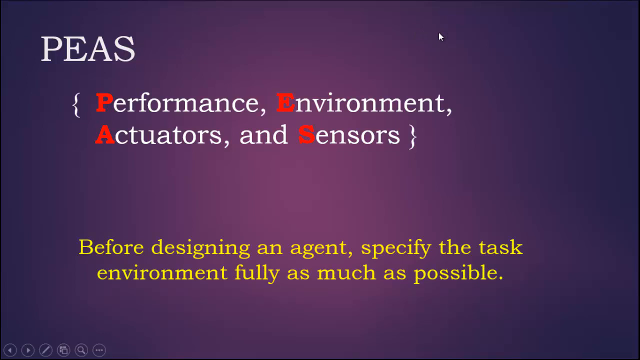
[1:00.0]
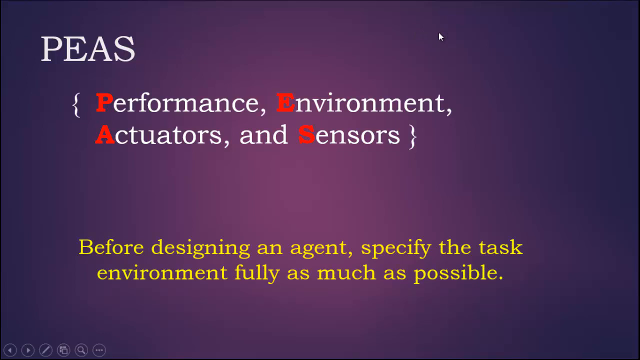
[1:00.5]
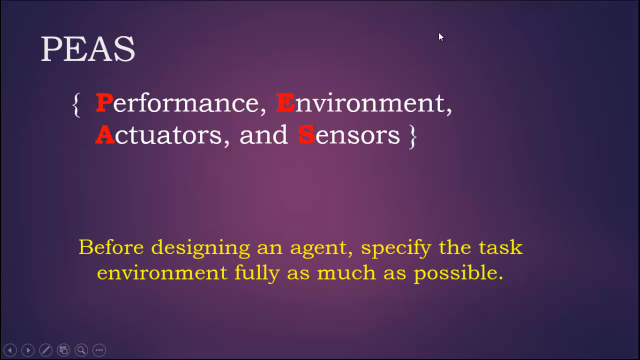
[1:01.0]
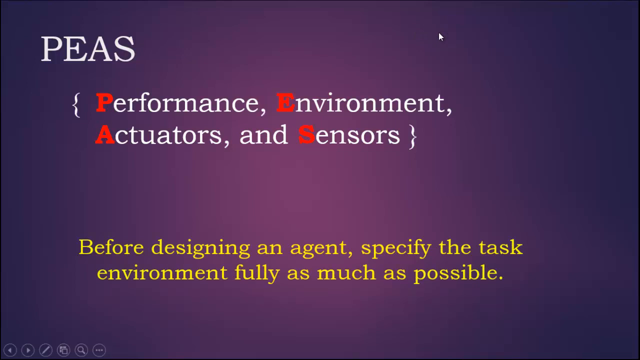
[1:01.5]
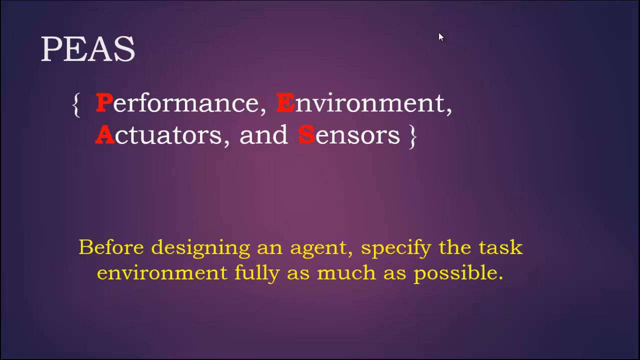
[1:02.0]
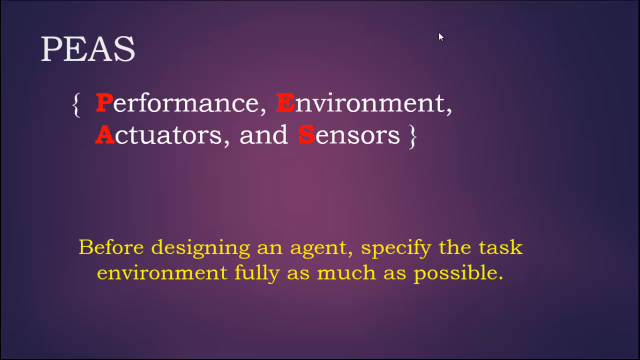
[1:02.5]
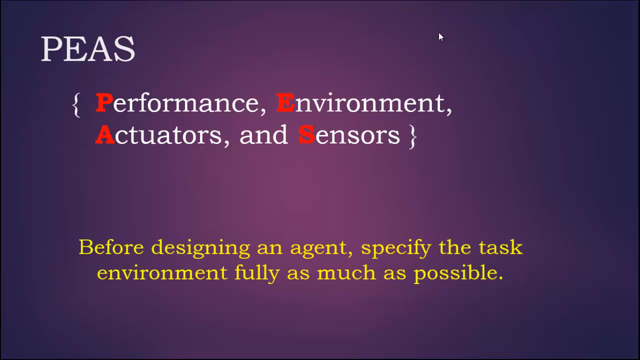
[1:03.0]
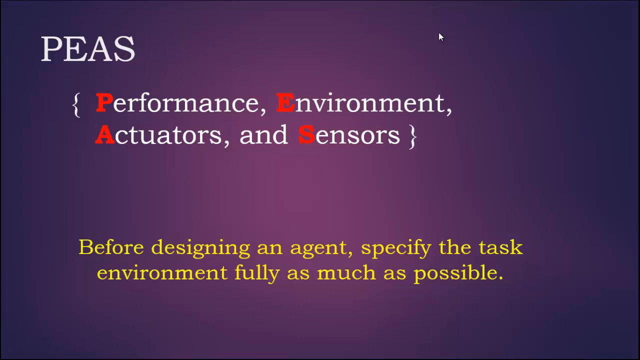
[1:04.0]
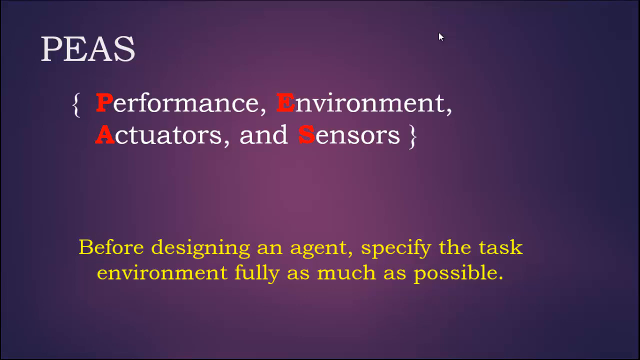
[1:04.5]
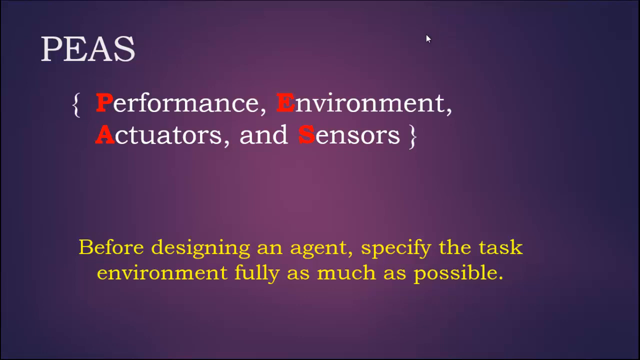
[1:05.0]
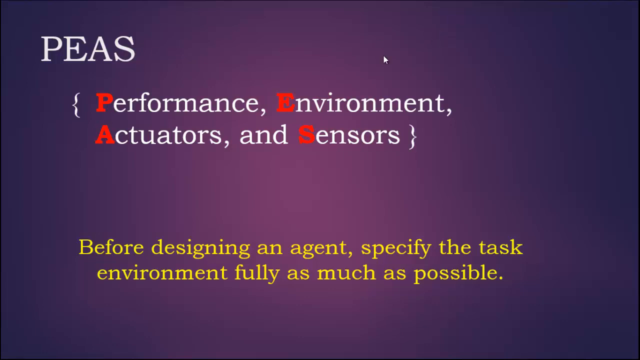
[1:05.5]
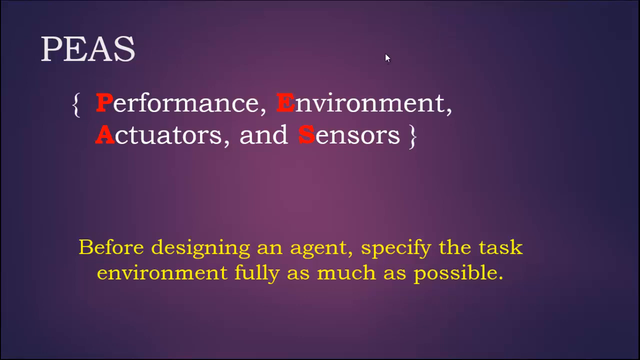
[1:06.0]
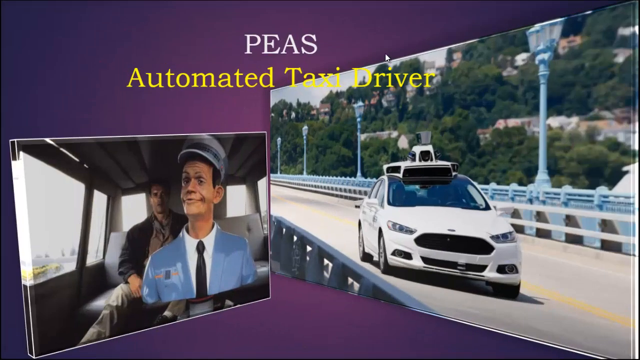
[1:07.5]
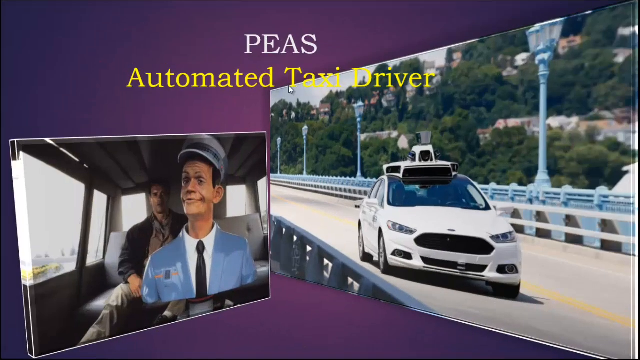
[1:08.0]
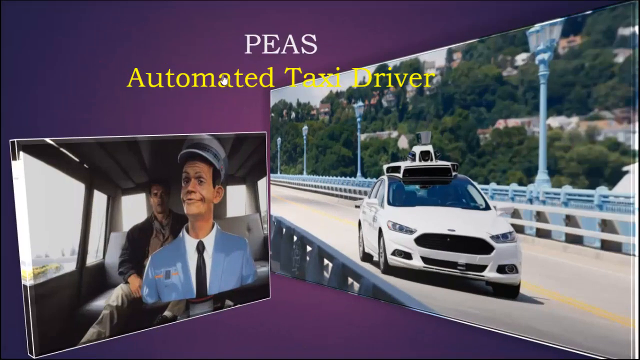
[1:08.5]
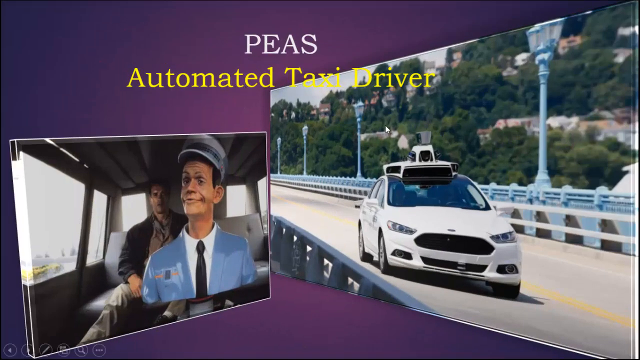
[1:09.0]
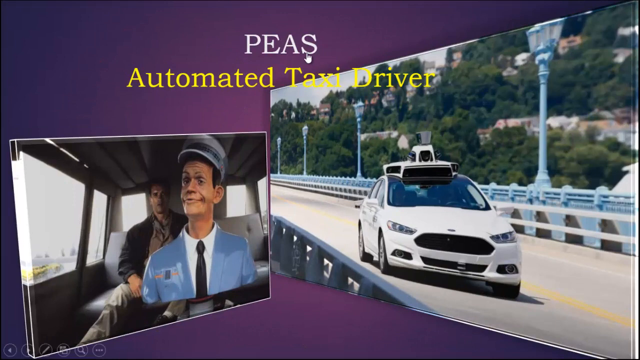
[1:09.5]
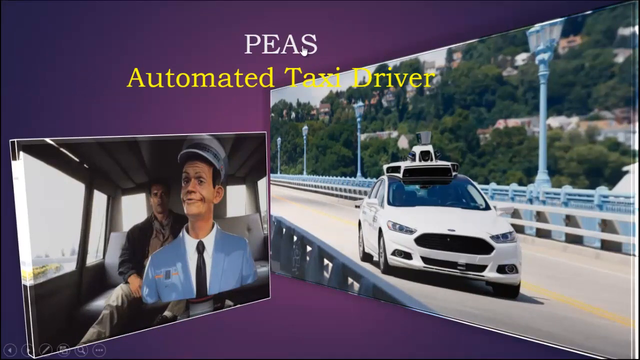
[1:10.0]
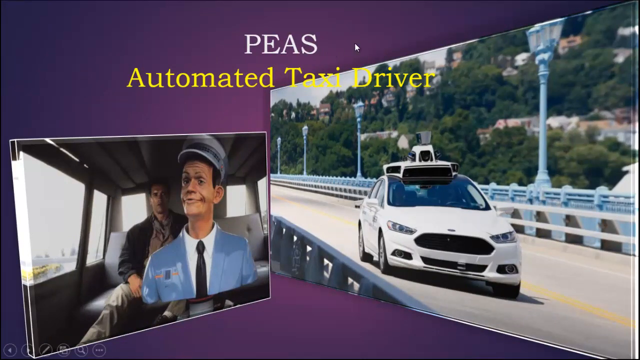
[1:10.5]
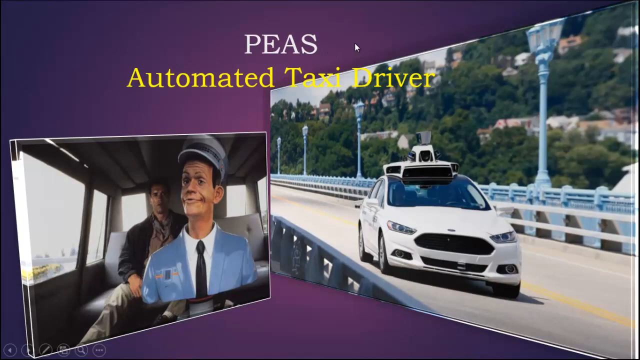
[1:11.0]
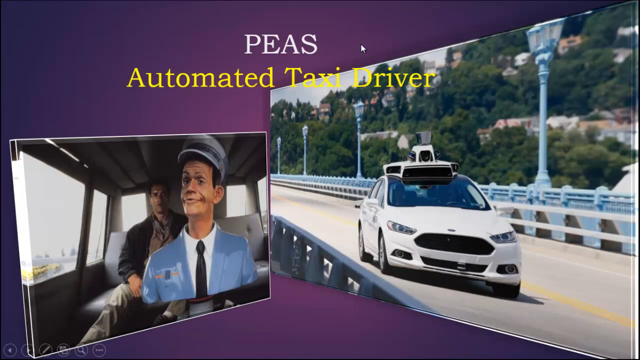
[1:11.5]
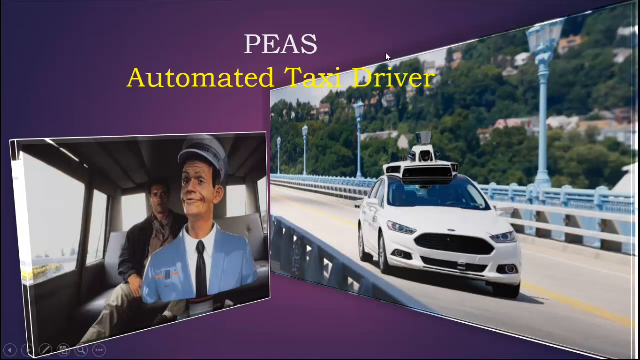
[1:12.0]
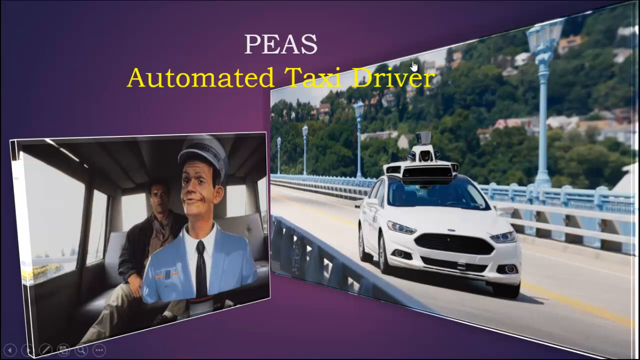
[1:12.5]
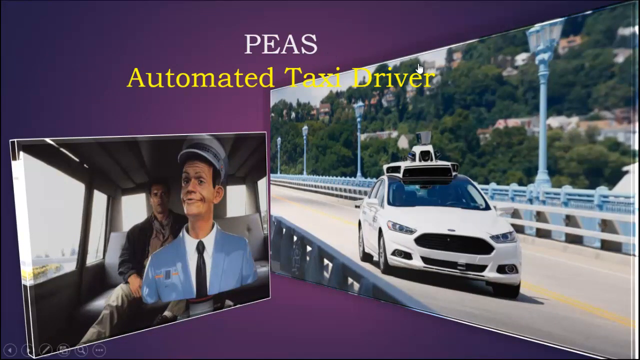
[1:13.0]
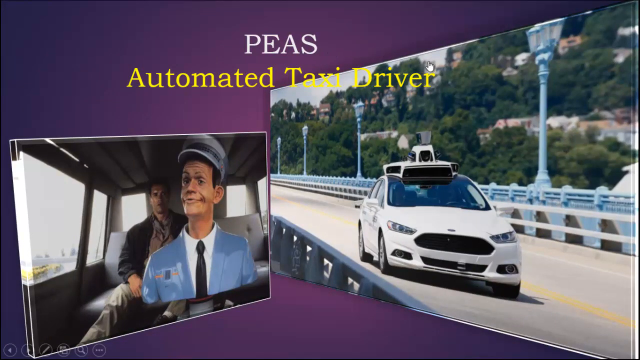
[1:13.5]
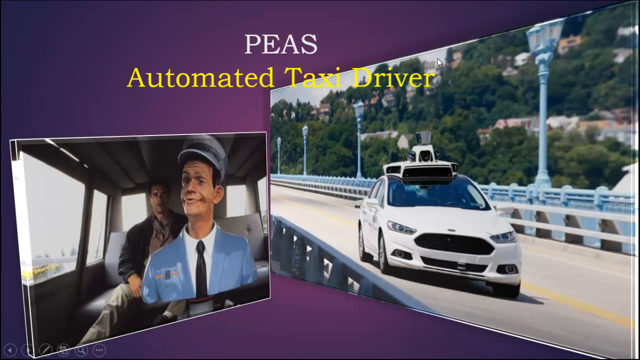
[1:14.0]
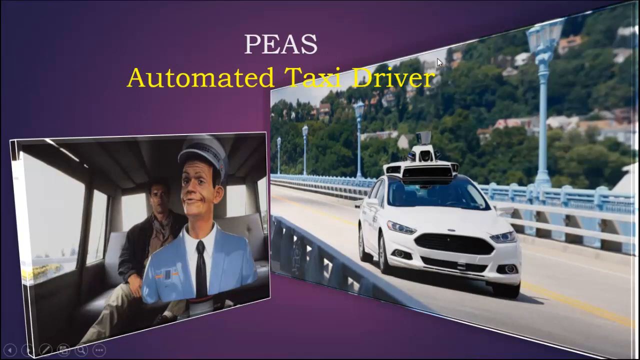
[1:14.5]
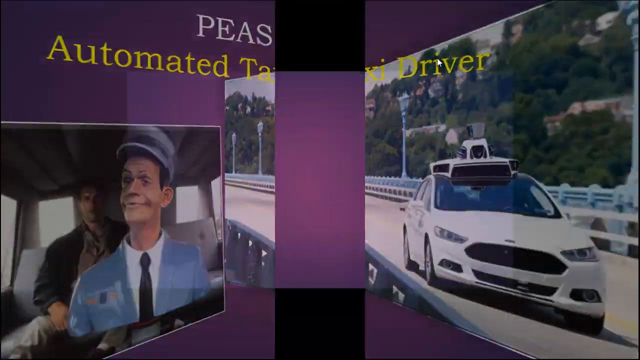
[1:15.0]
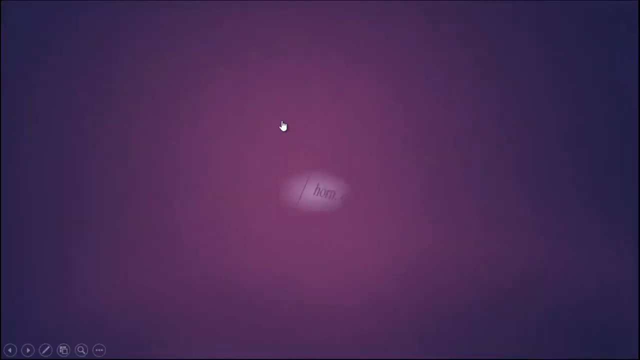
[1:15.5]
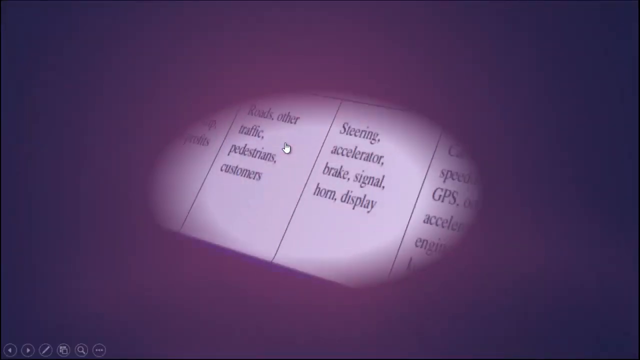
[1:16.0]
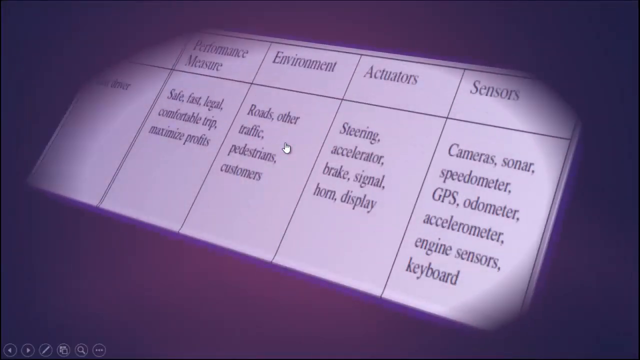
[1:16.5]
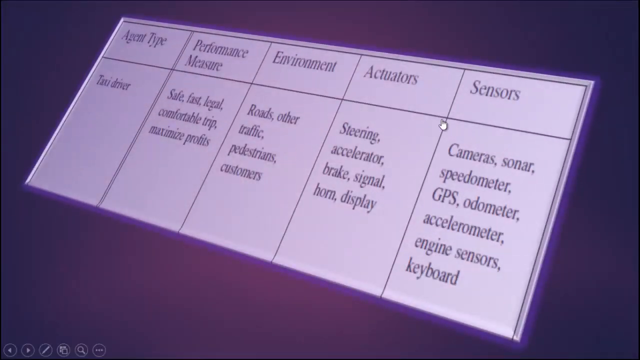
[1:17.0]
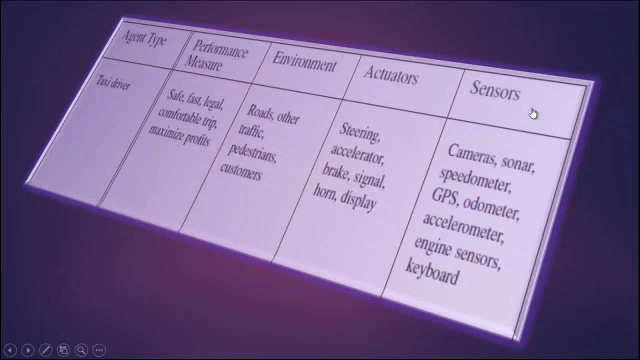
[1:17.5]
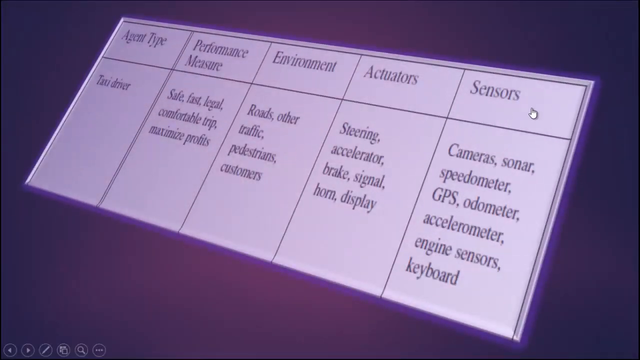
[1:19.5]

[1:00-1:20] The slide stays on screen for a few moments as the cursor moves around, and then the words fly off the page. Two pictures emerge at an angle on the screen under the title "automated taxi driver" in yellow. One shows a man in a blue suit and a cap who looks like a driver; the other shows a passenger car driving with something on top of it. The cursor arrow points to the word "peas" and then hovers over the word "driver." The images slide off the page, a circle grows larger, and an image of a word table appears, with five words across the top and descriptions below them. A hand points to the last column, the word "sensors."